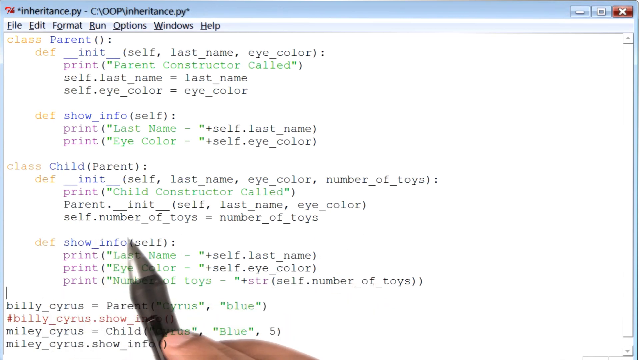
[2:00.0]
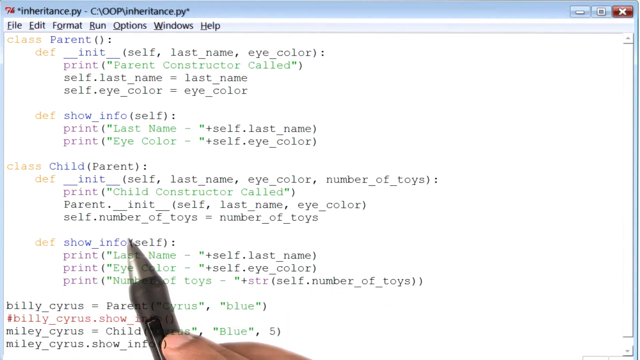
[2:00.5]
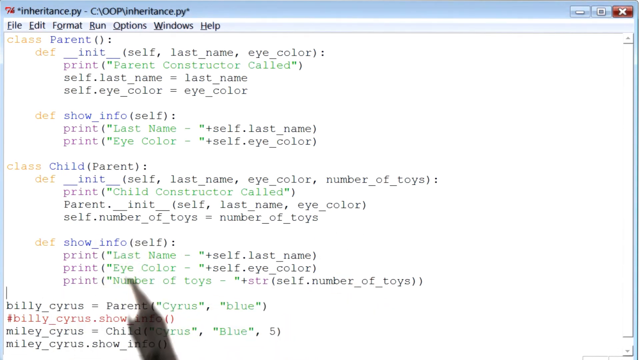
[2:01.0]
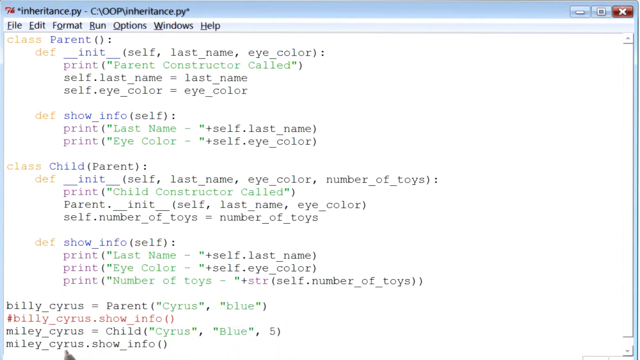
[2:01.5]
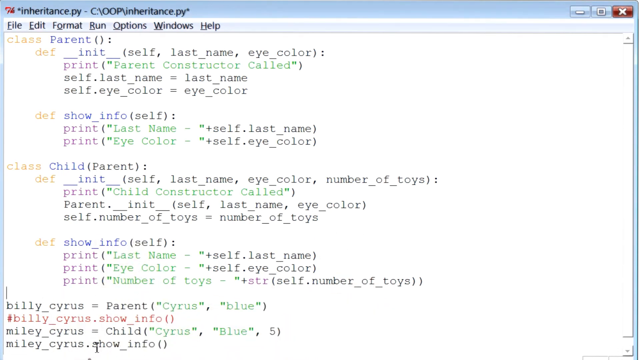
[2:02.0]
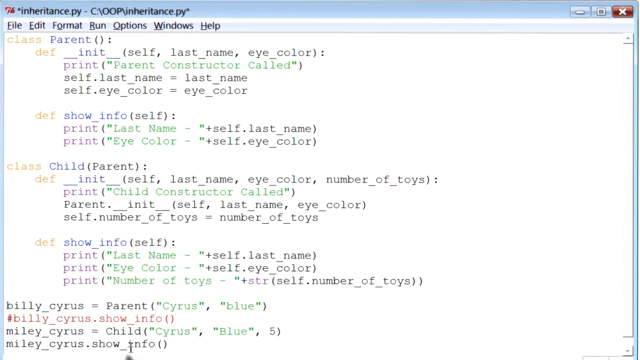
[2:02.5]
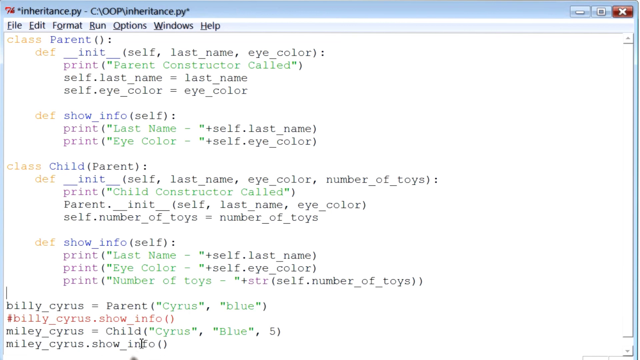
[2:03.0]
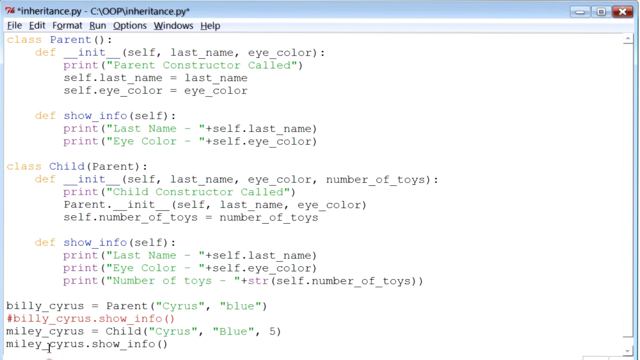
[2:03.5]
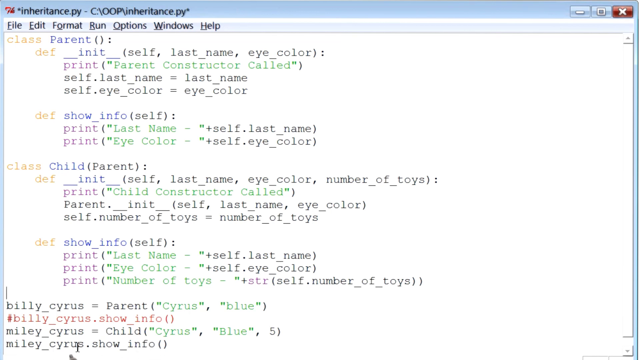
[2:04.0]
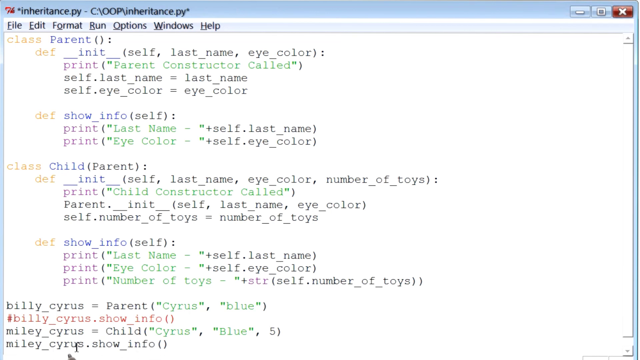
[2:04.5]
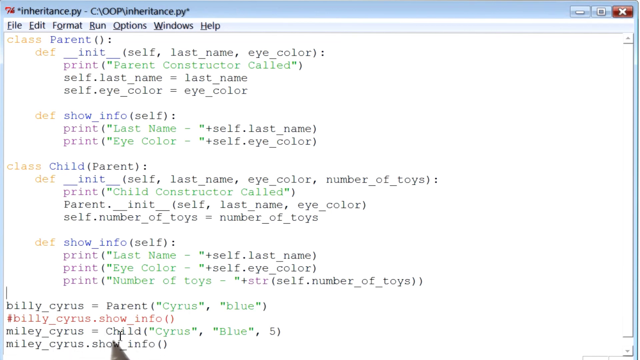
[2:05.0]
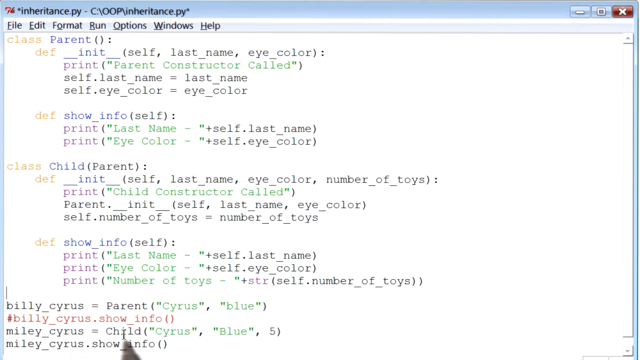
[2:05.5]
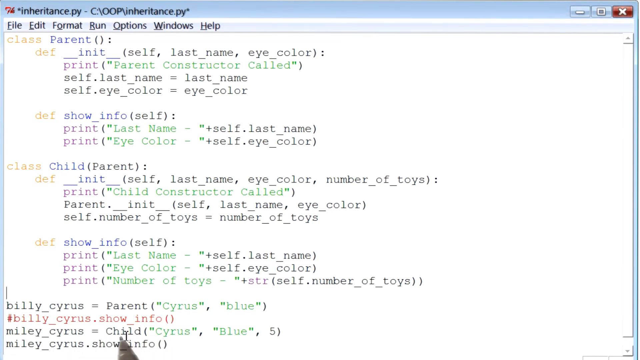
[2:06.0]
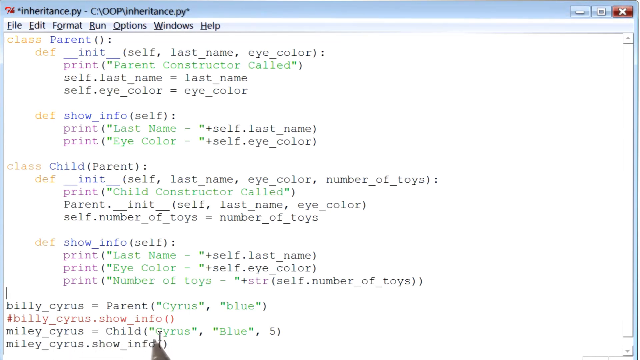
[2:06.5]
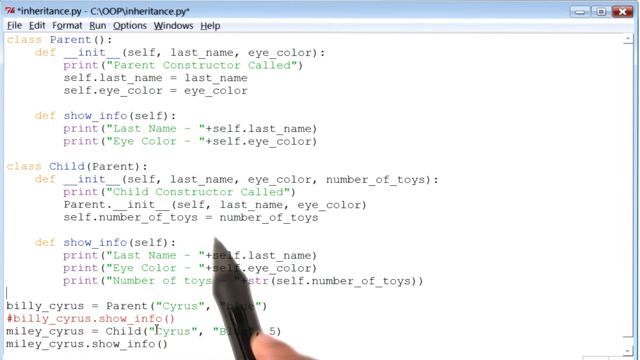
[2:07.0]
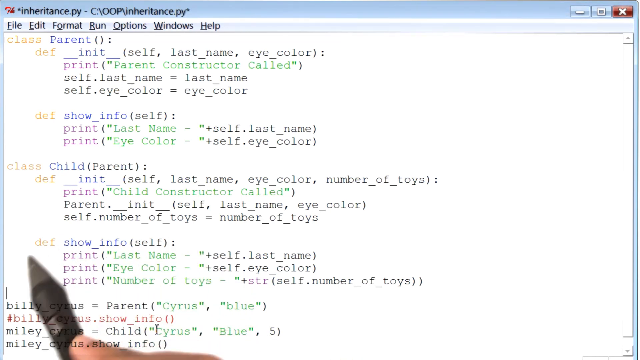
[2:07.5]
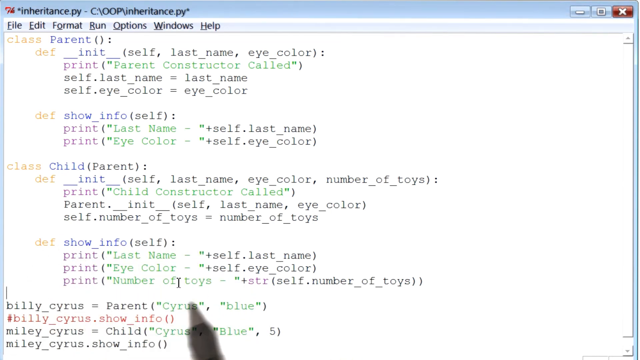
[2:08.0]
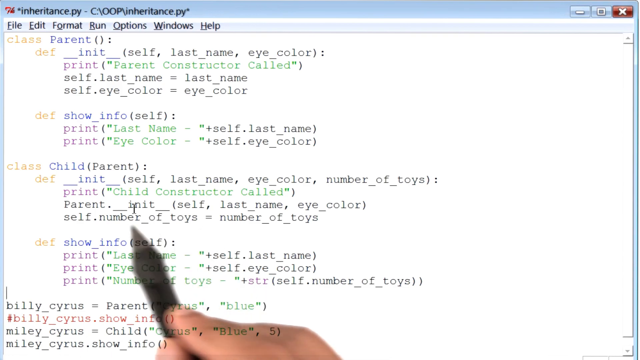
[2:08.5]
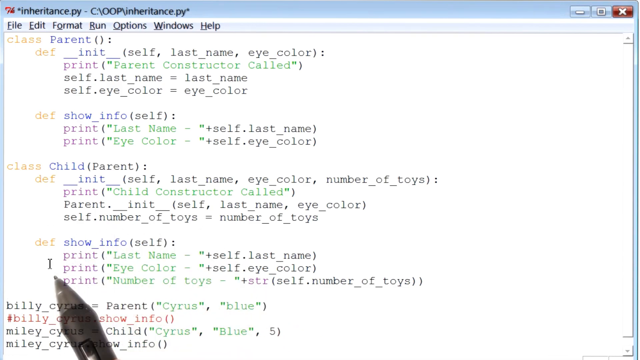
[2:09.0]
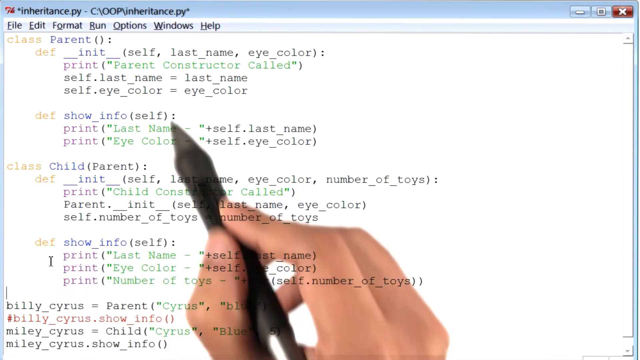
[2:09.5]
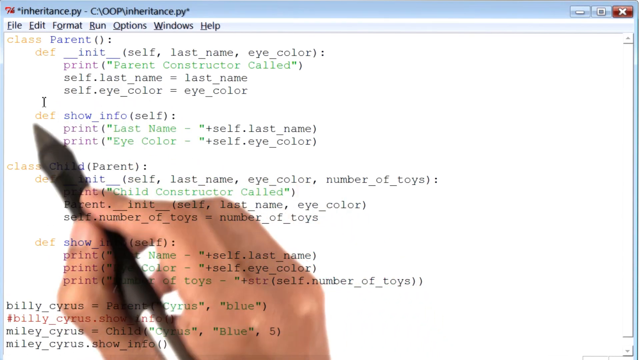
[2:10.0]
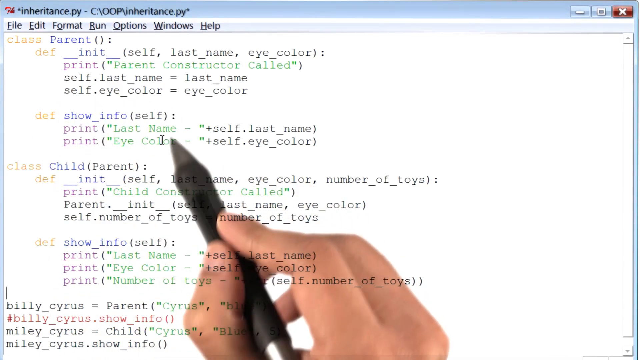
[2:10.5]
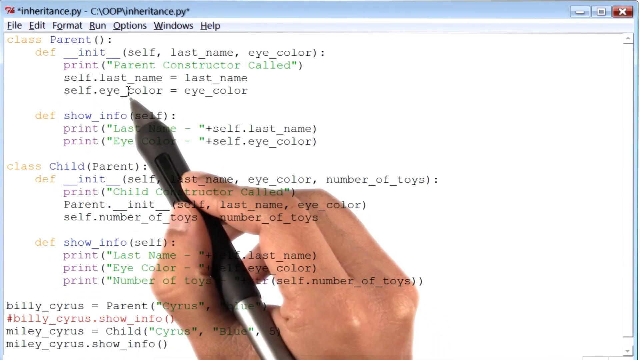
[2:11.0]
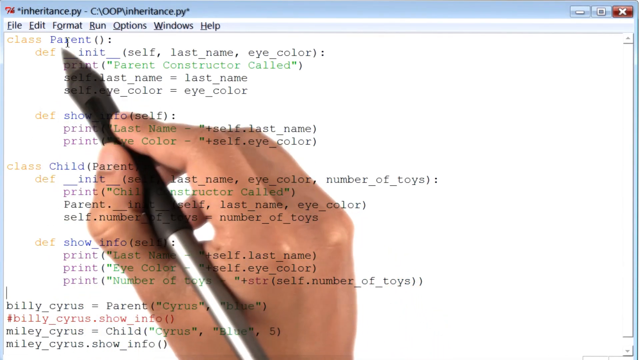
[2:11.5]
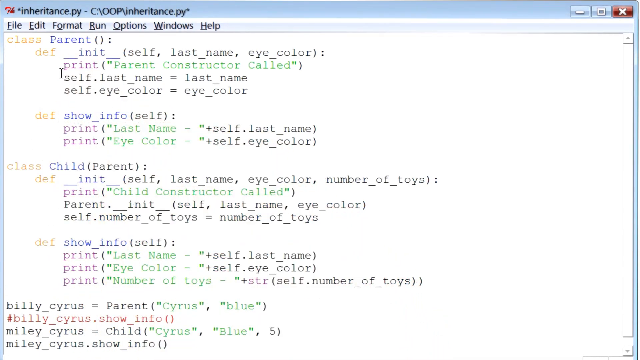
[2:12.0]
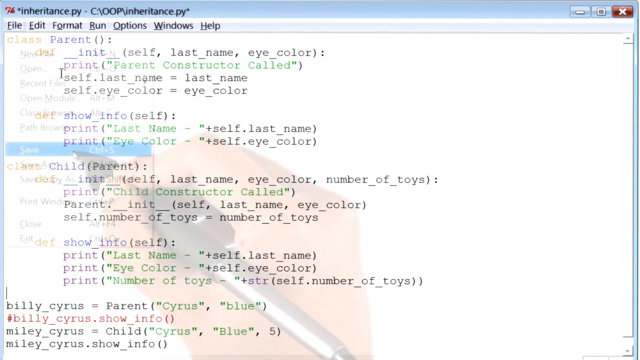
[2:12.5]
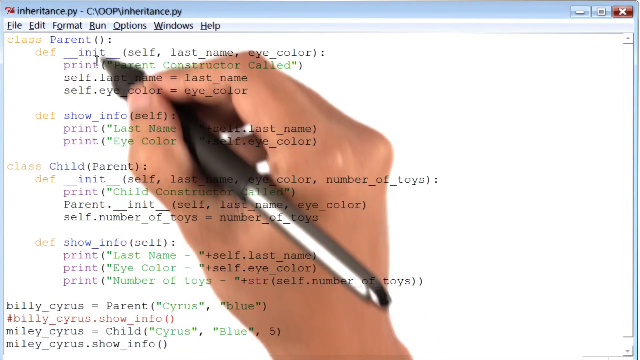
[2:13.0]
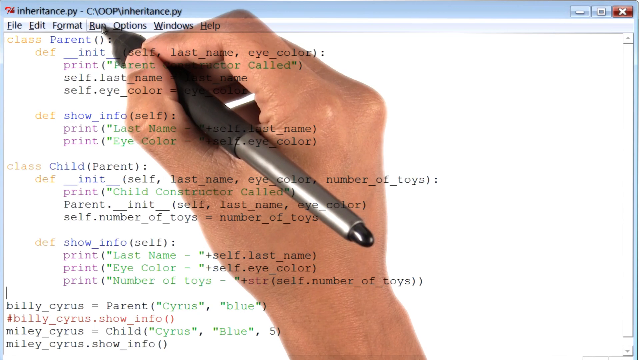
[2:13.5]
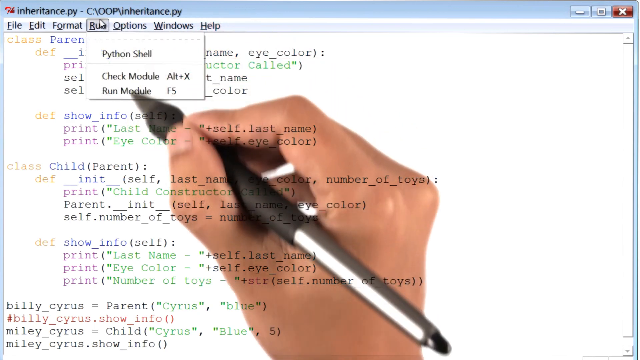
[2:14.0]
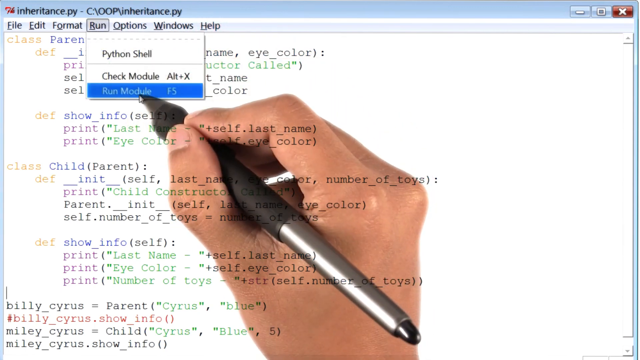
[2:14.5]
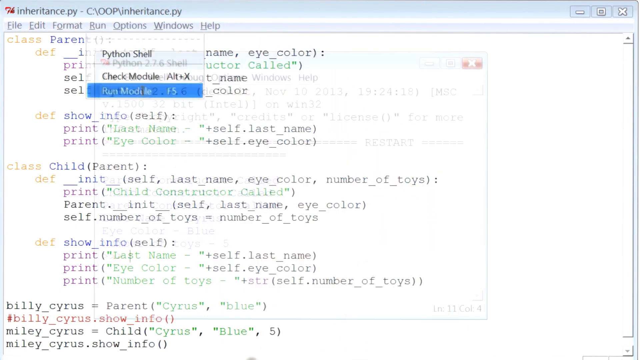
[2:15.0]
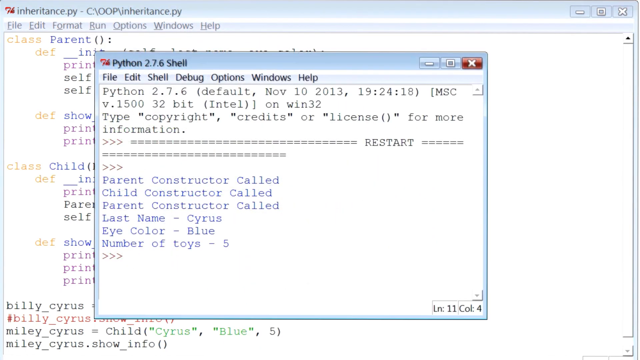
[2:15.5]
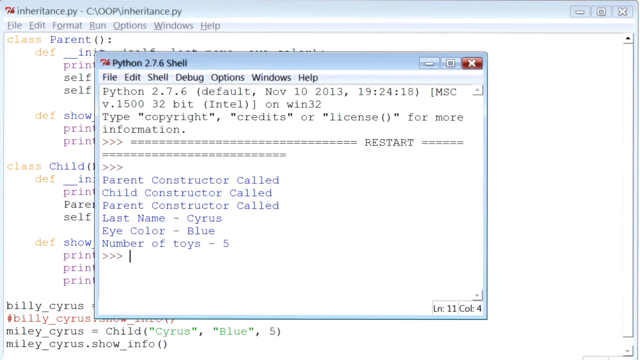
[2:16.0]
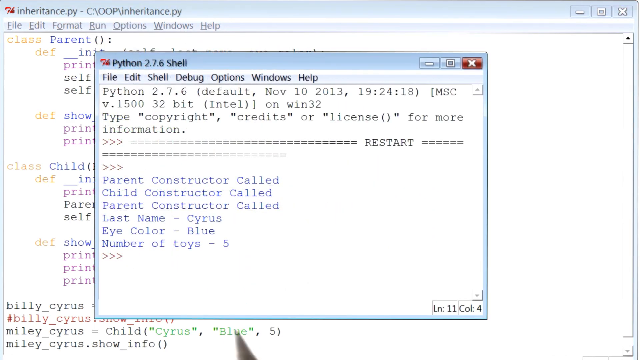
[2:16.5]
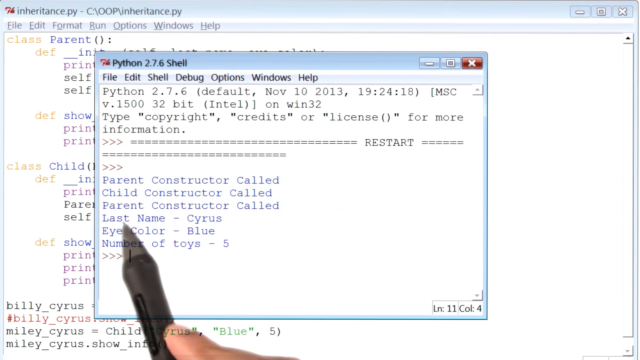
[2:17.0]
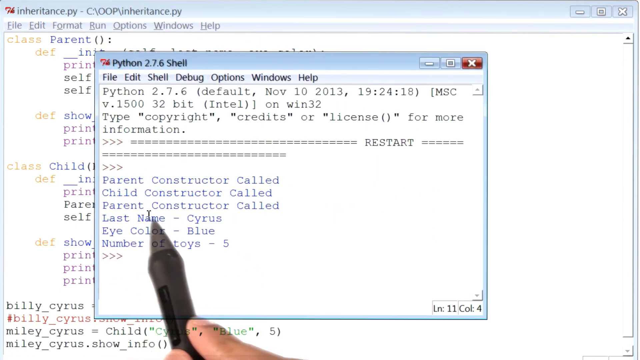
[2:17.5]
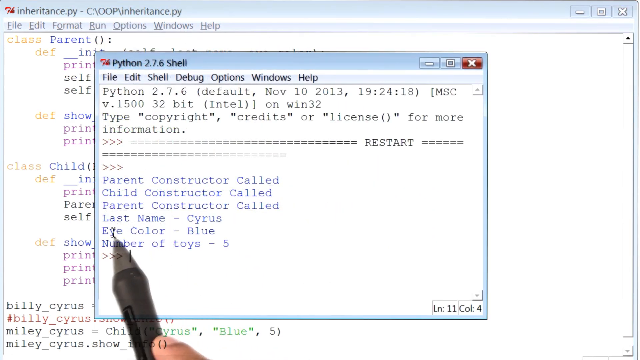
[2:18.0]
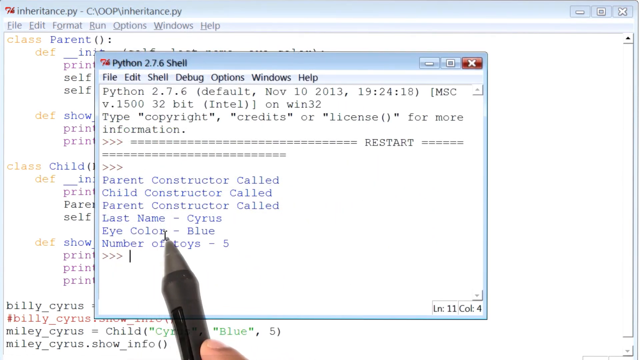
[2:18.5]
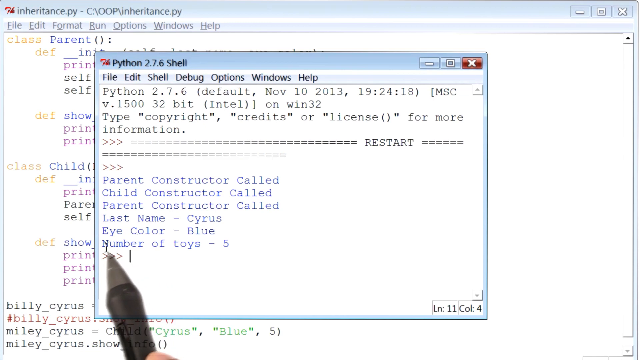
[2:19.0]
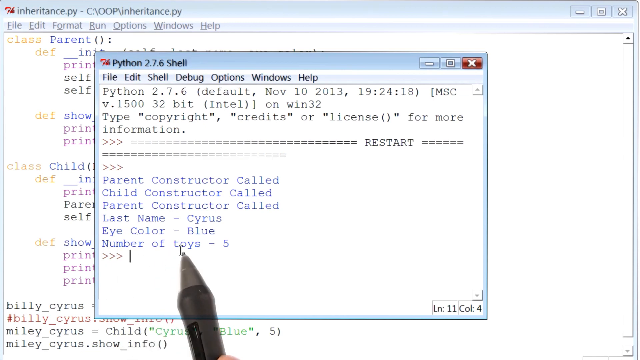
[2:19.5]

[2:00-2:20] Someone is apparently teaching coding in a Python document called "Inheritance PY", using Billy Ray Cyrus and Miley Cyrus as sample names, with terms such as self, last name and eye color, plus number of toys for the child. A right hand holding a stylus comes out and circles, underlines and points to things. Sometimes the person types a little, but mostly they keep circling things with the stylus. The focus then appears to move to number of toys before the video stops.